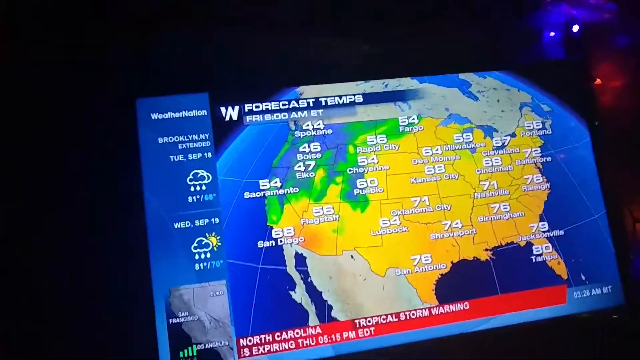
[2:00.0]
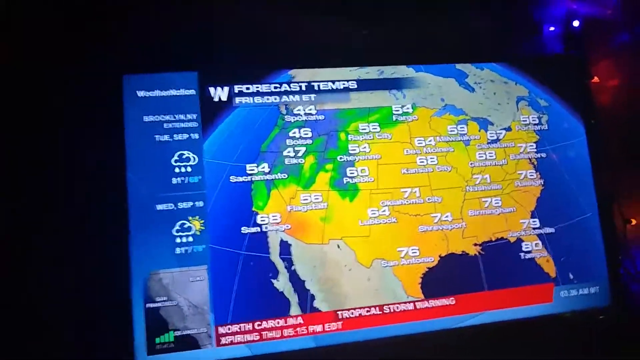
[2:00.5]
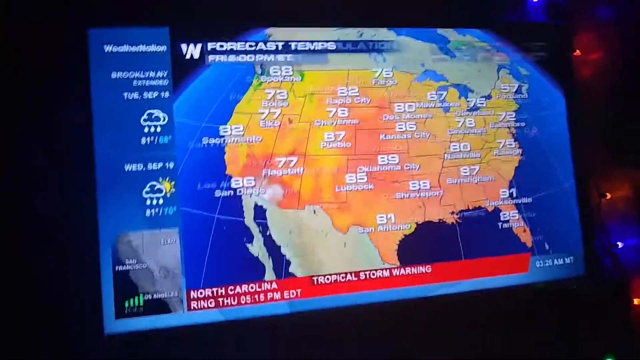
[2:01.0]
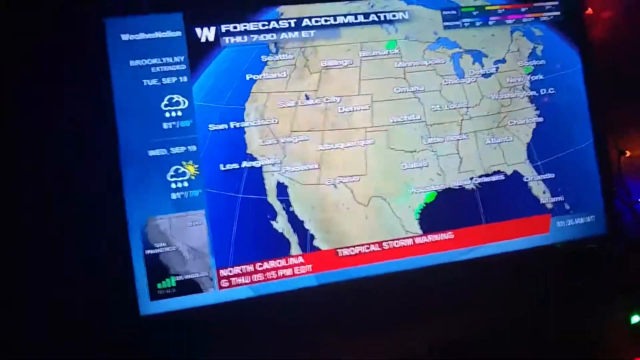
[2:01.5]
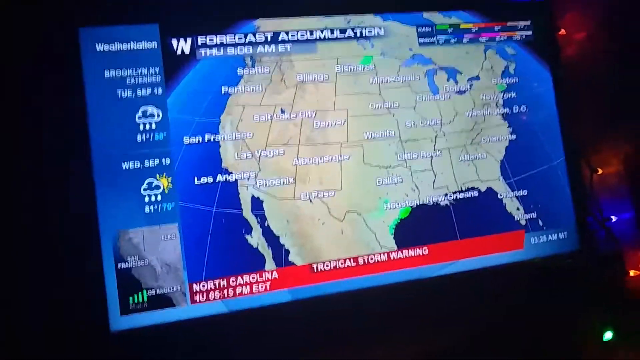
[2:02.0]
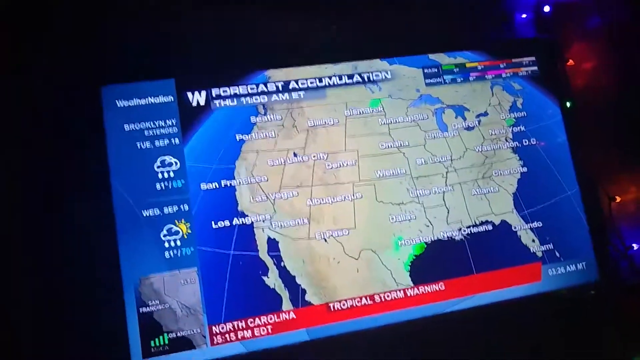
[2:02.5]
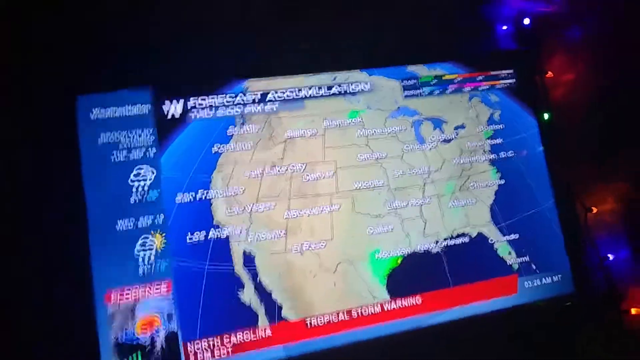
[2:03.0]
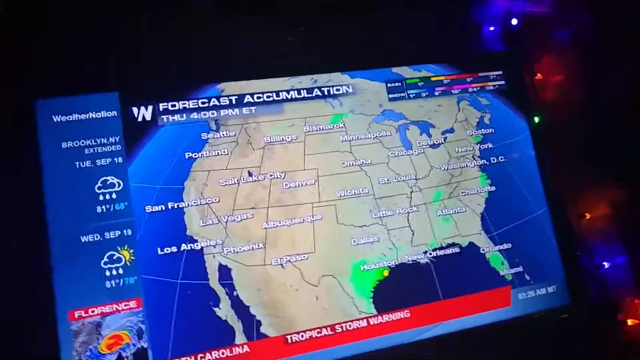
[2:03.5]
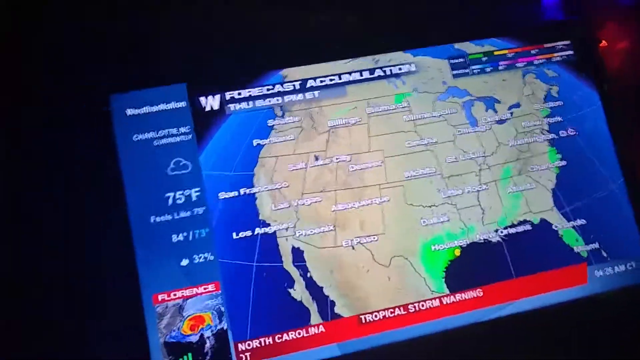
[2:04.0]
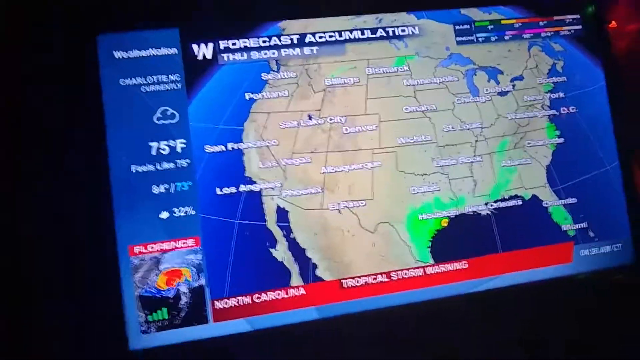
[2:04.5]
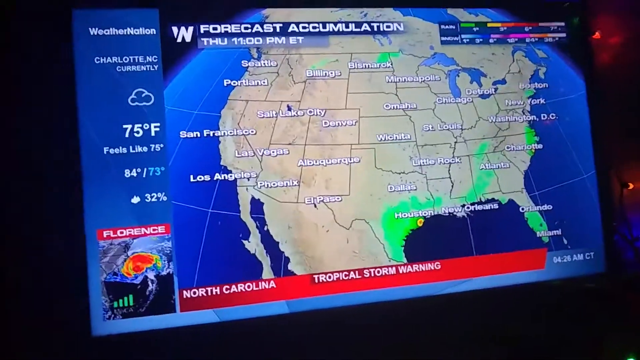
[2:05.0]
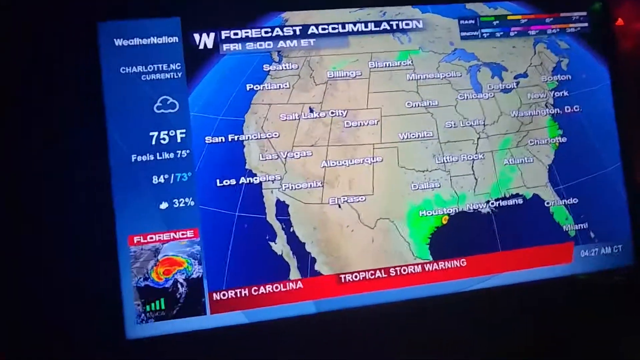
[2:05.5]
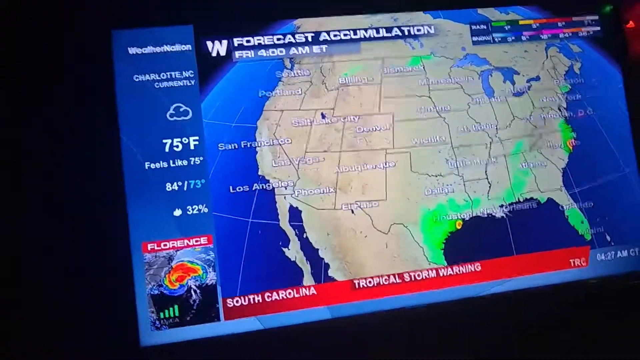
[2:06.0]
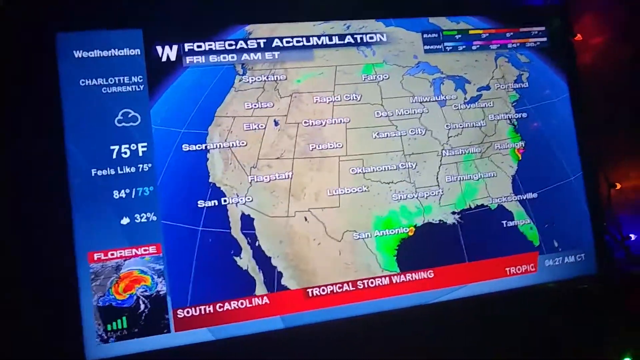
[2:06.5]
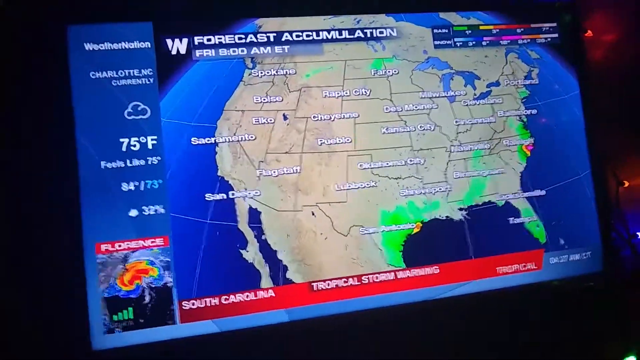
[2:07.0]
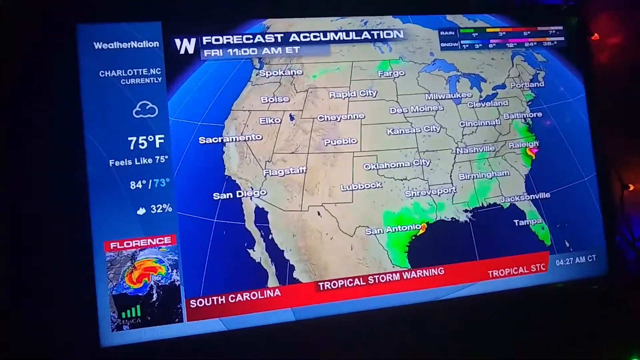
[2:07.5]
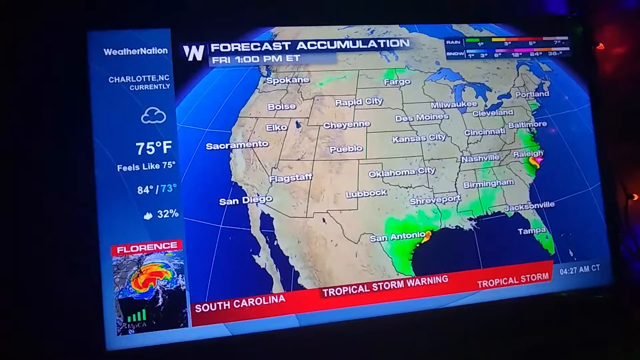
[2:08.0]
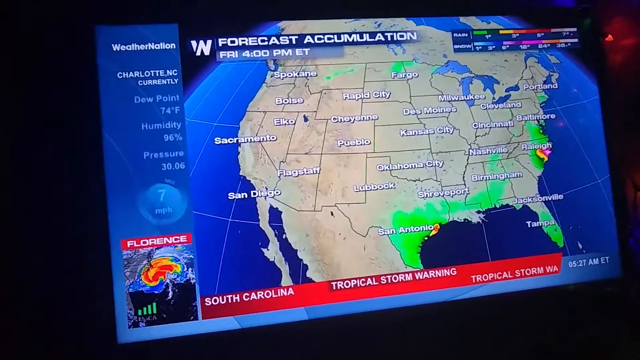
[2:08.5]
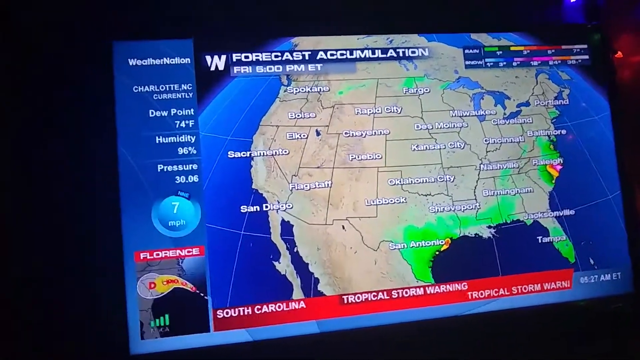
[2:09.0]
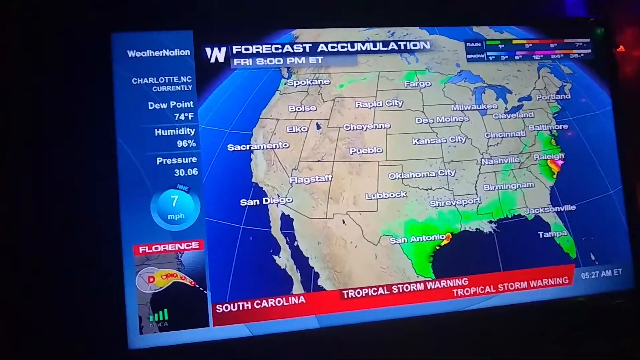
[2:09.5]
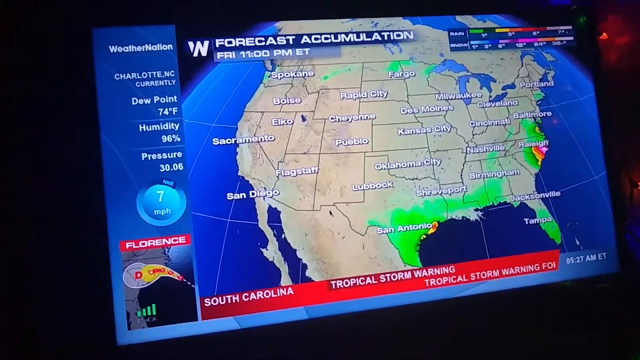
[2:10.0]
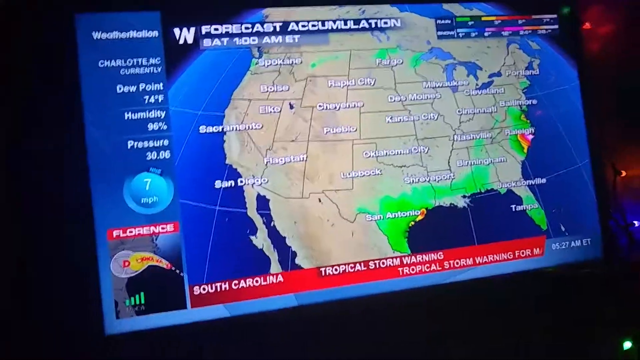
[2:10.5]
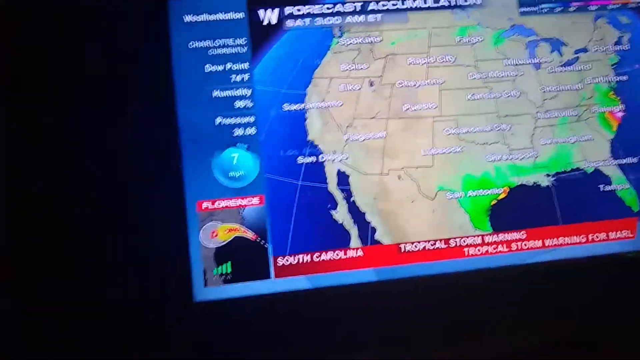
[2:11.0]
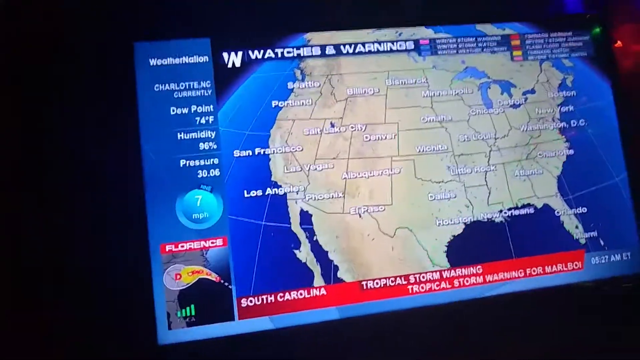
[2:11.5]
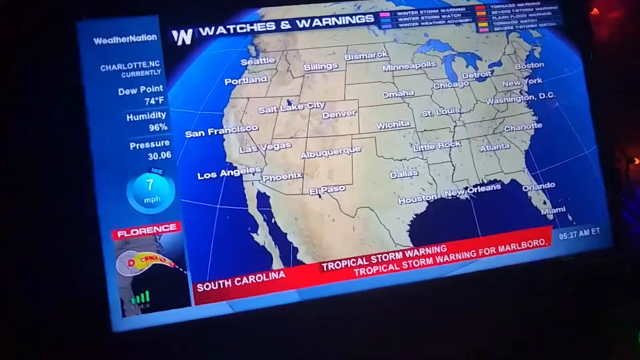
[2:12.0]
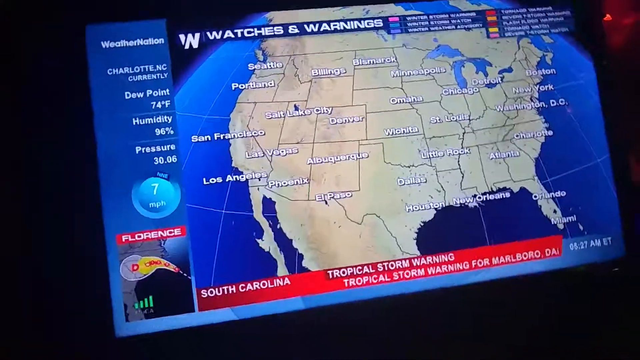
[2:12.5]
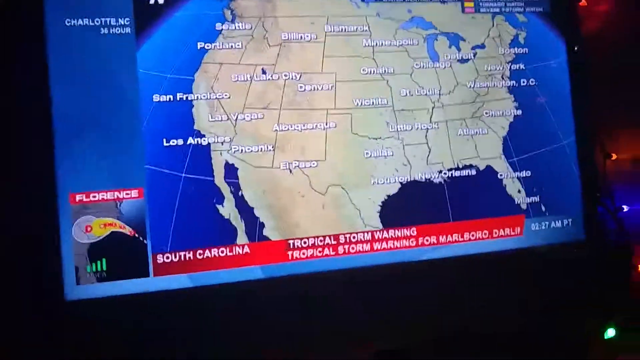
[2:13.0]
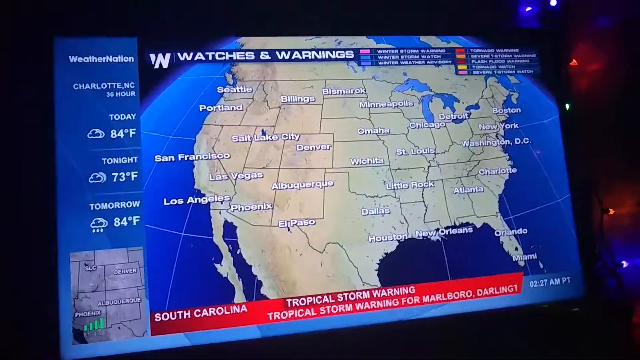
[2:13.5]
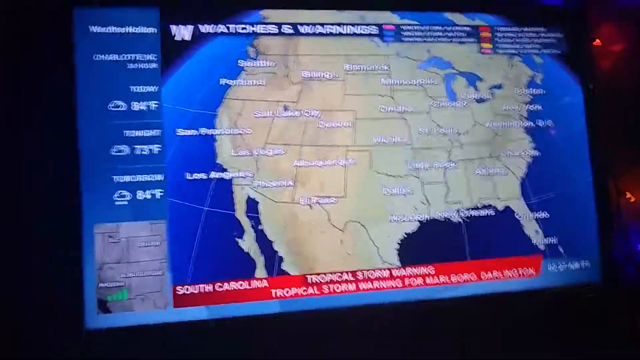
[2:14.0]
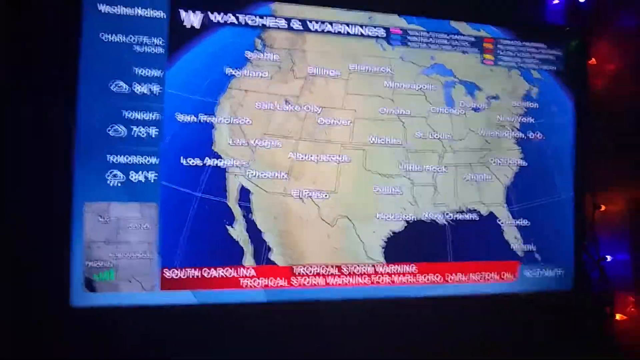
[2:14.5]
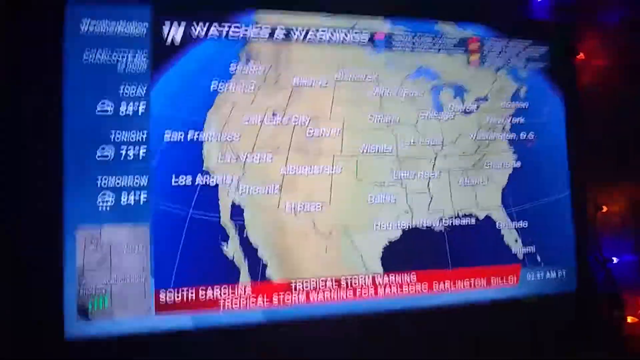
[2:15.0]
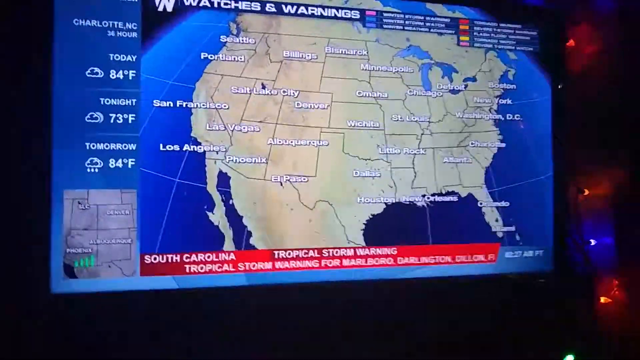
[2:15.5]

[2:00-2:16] The forecast temperatures scroll through time, then the screen transitions back to forecast accumulation, showing the rain map. Green appears mainly in the southeast, more solid along the coast of Carolina and surrounding areas, with some sparse green in Florida and some bordering states, some yellow near Houston with green all around that area, and some green in the north near North Dakota. The green areas then spread out and disperse. The screen transitions to "Watches and Warnings" displayed at the top, with most of the map appearing clear. The sidebar on the left reads "Charlotte NC currently," "74 Fahrenheit," "humidity 96%," "Pressure 30.06," and below that 7 miles per hour, which appears to be wind. Below this, a small window shows the estimated path of the hurricane with the text "Florence" at the top.